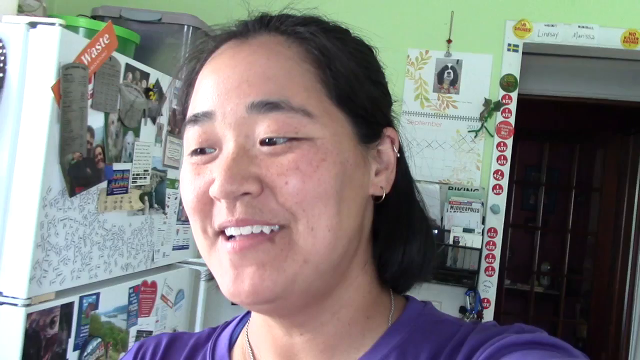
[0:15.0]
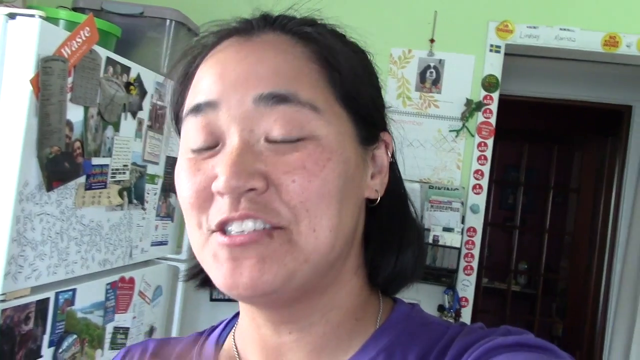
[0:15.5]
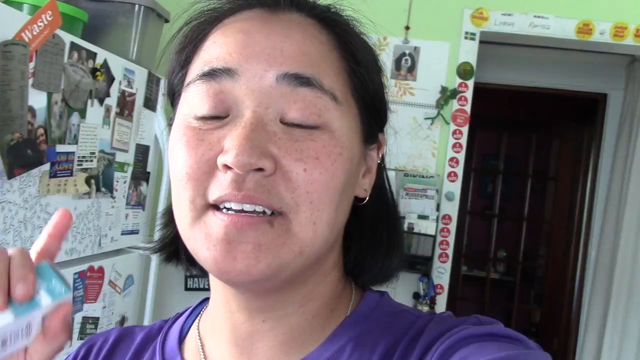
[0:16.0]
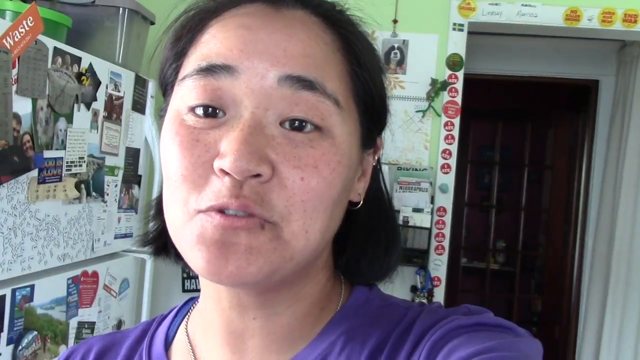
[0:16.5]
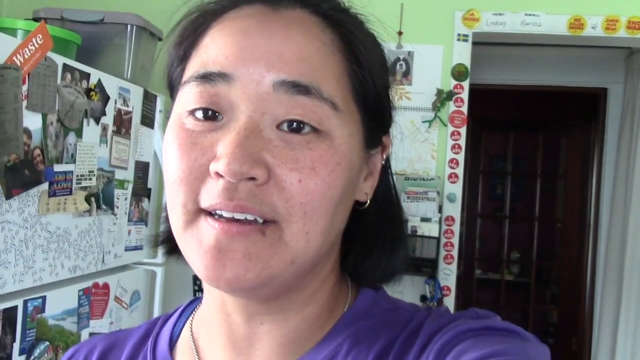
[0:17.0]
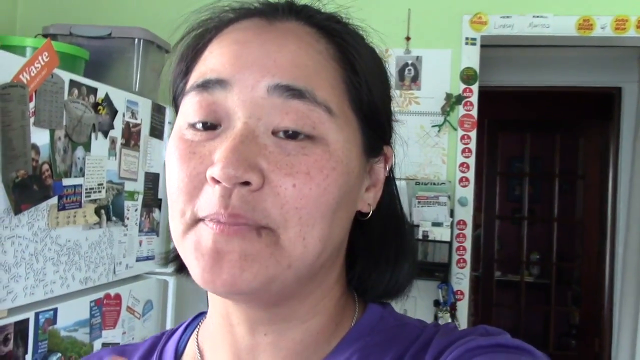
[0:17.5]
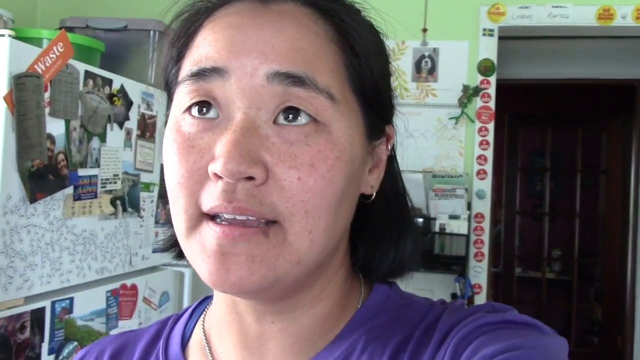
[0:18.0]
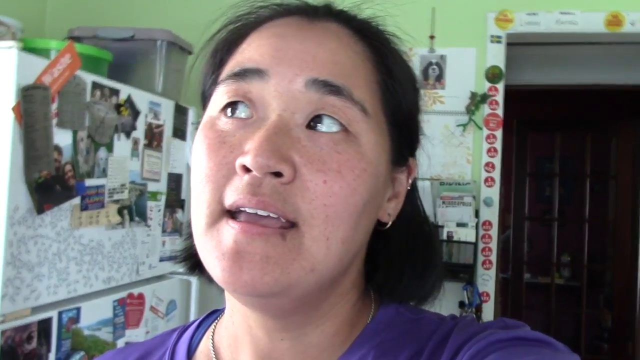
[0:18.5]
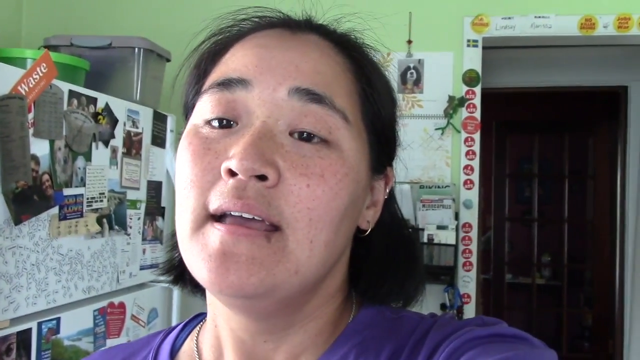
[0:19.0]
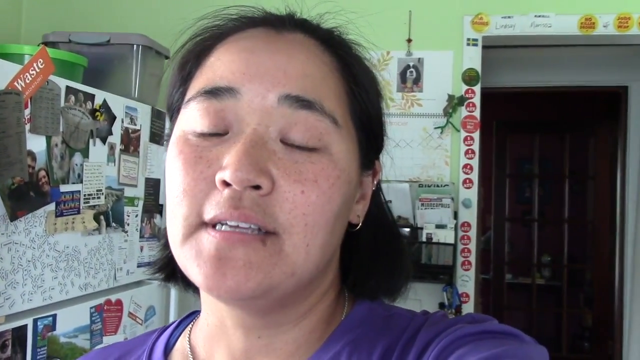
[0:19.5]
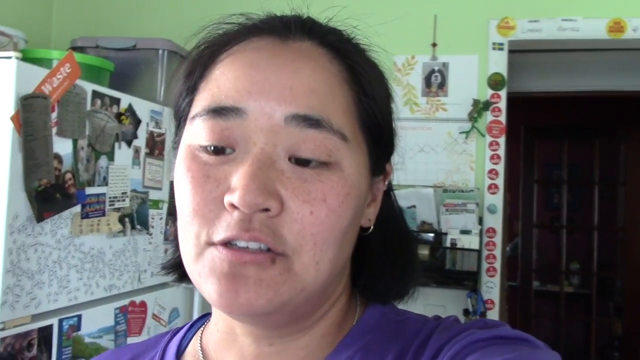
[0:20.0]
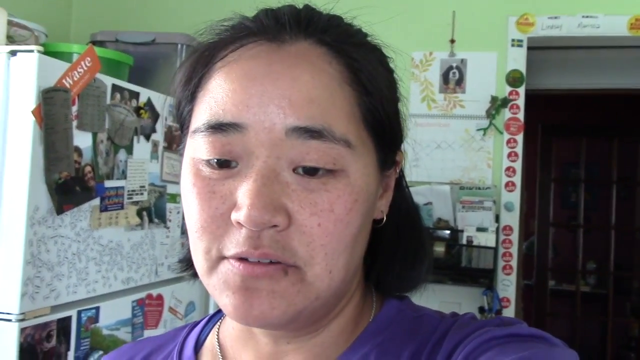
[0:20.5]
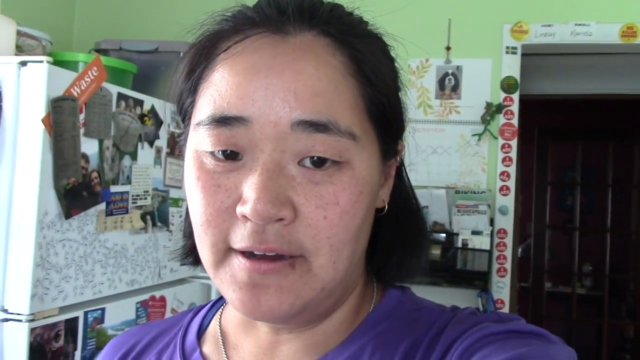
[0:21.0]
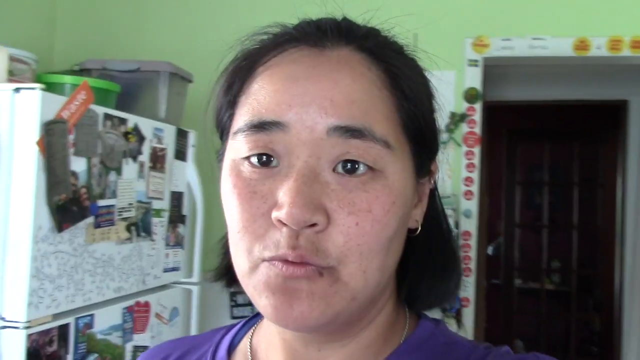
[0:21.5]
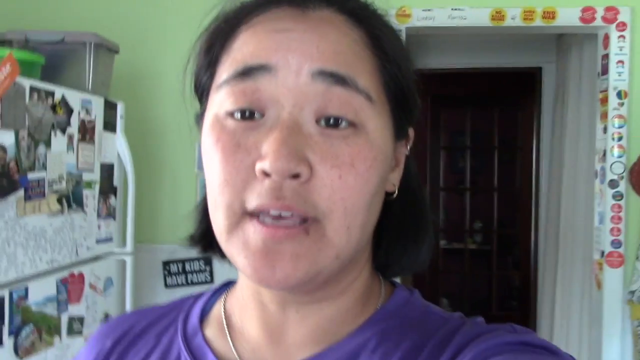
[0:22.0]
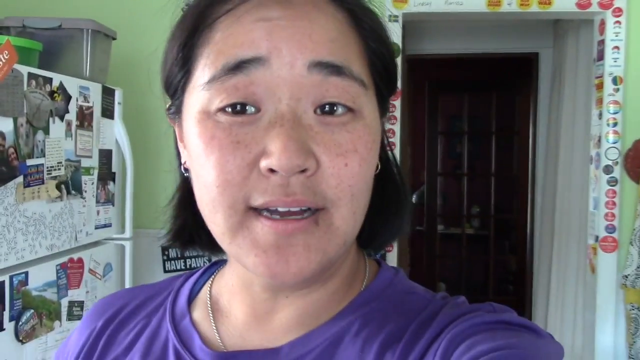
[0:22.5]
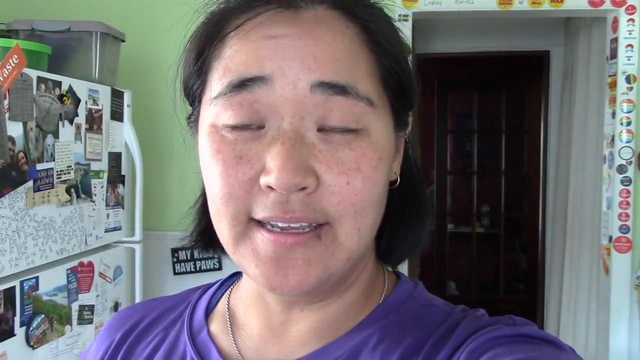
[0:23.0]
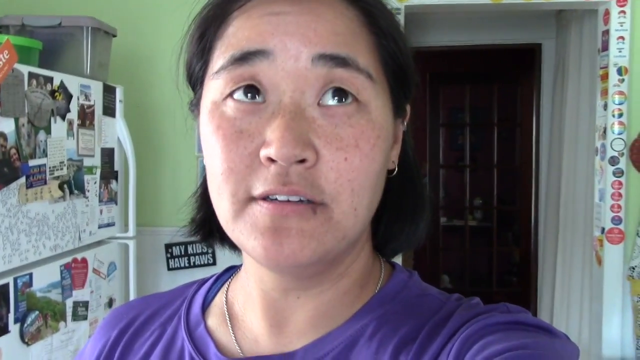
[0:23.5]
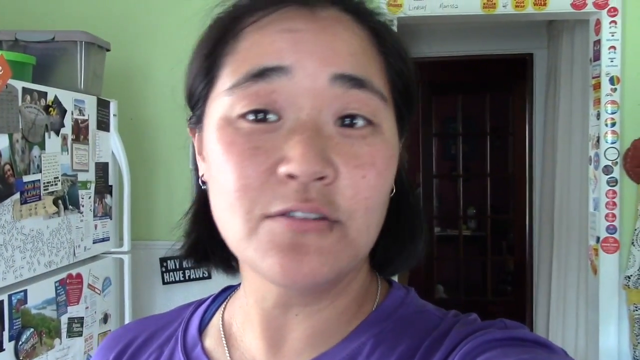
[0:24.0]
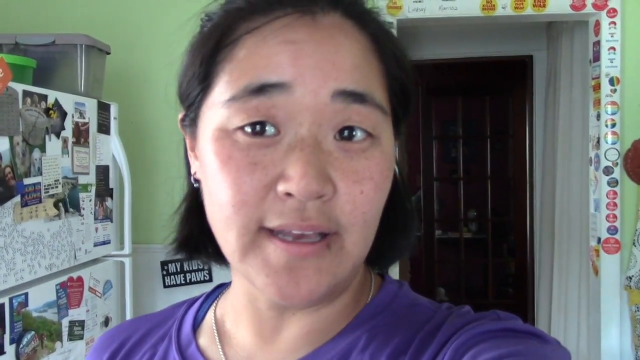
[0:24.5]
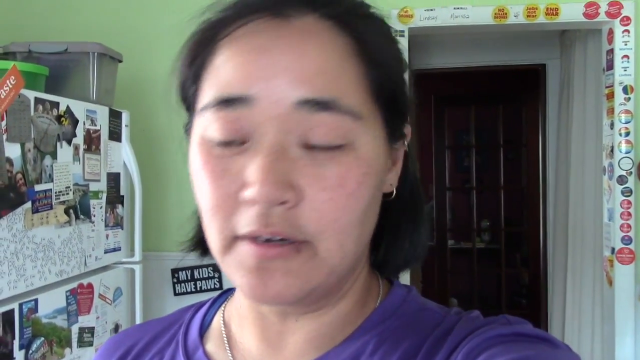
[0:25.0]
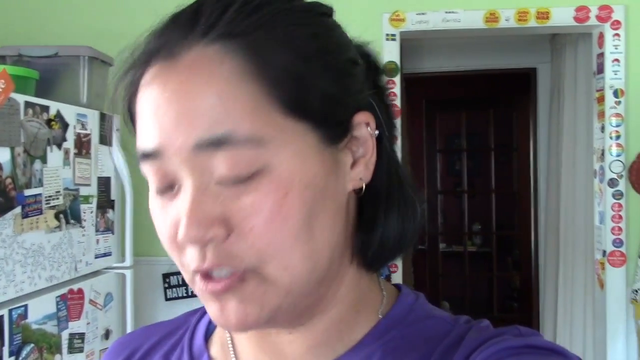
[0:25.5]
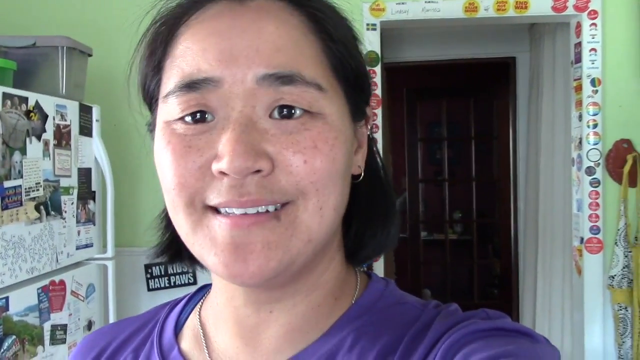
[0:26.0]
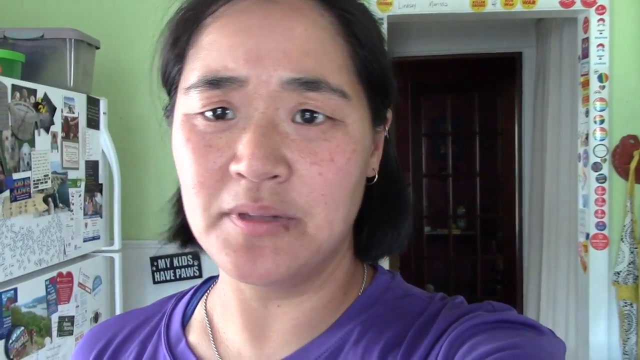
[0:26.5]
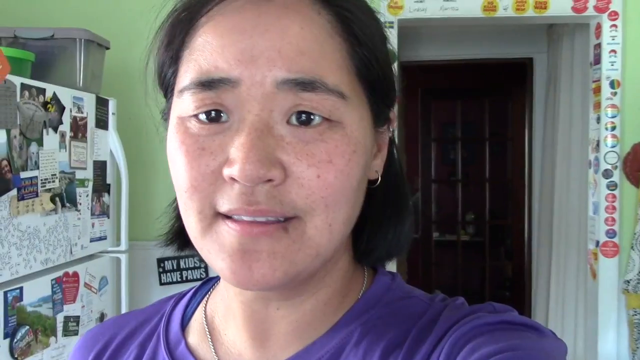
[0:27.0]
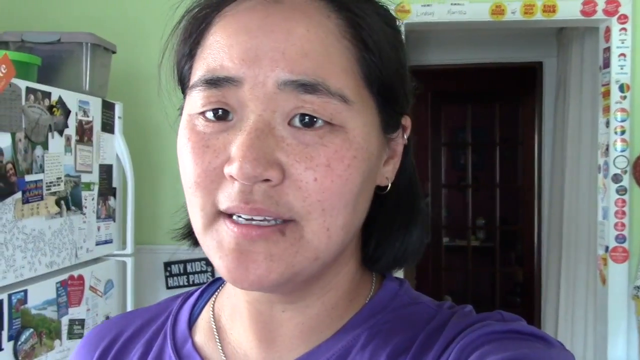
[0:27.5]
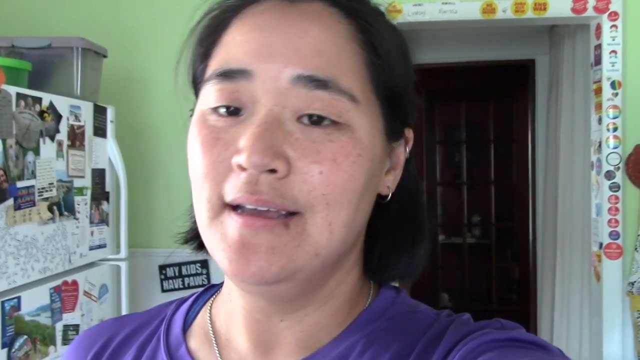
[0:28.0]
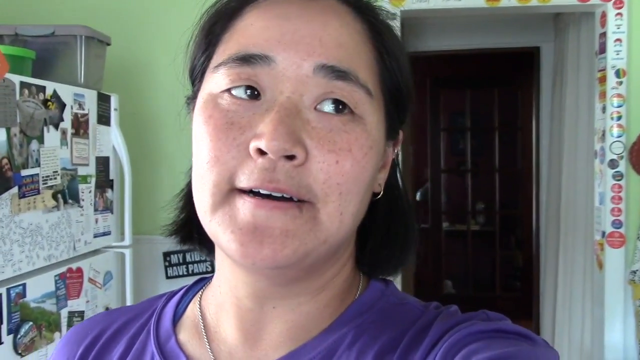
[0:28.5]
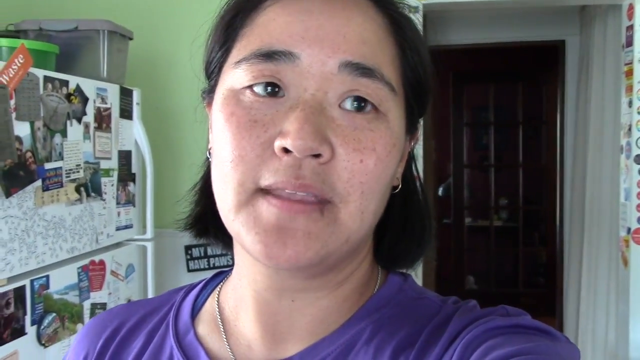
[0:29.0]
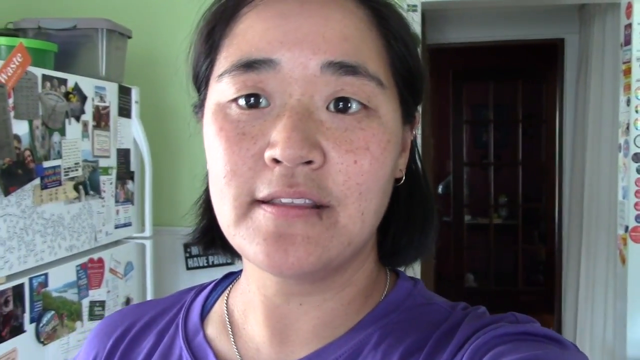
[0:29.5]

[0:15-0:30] The woman keeps speaking and looking at the camera. She holds something blue in her right hand, though it is not clear what it is. Her right ear is now visible, with one earring on it. She has a mole at the bottom left corner of her mouth (her left, the viewer's right), and what looks like a gold necklace, with parts of the chain visible around her collar. She has no cue cards and speaks candidly and naturally to the camera.